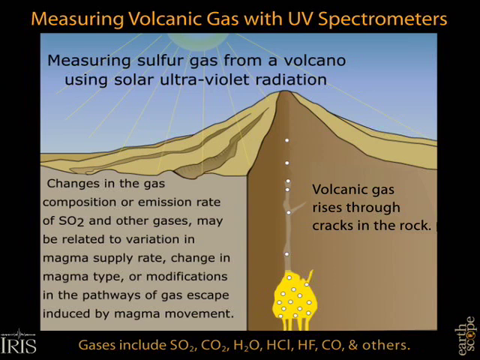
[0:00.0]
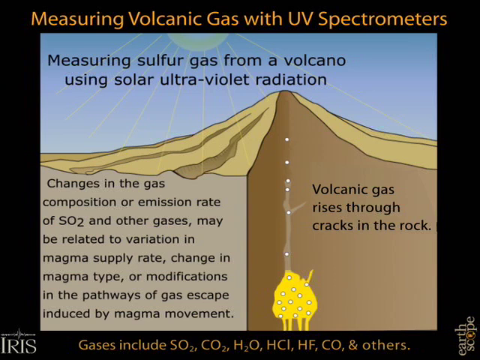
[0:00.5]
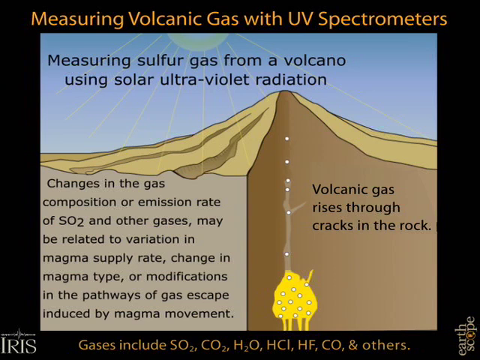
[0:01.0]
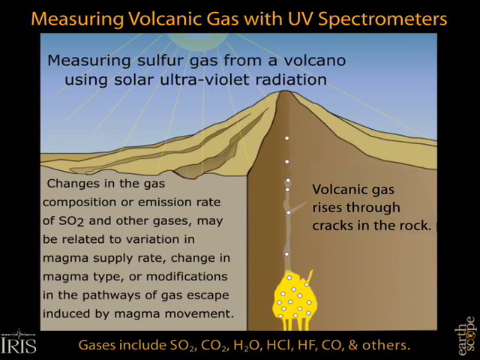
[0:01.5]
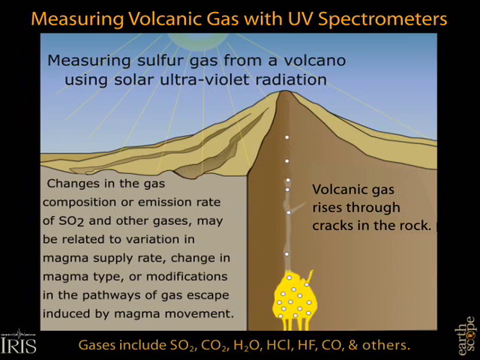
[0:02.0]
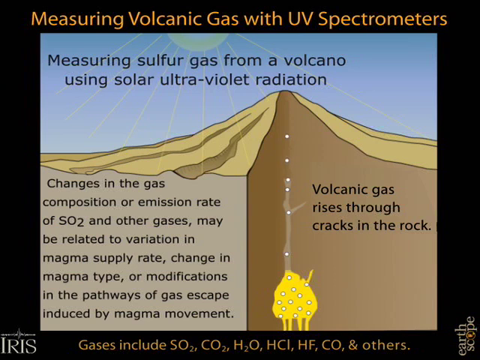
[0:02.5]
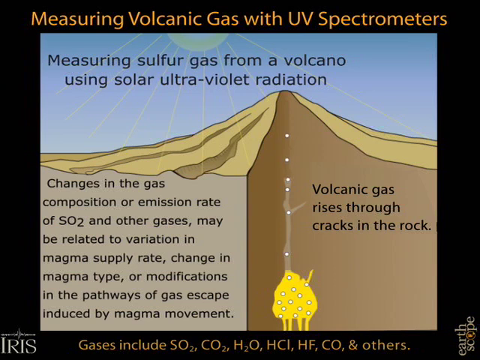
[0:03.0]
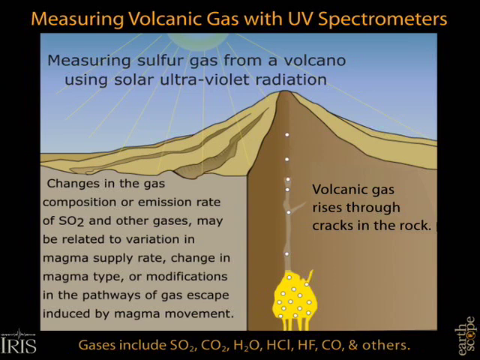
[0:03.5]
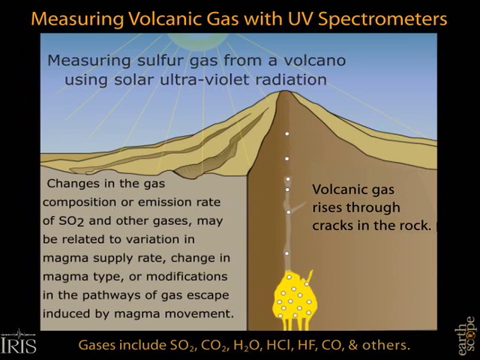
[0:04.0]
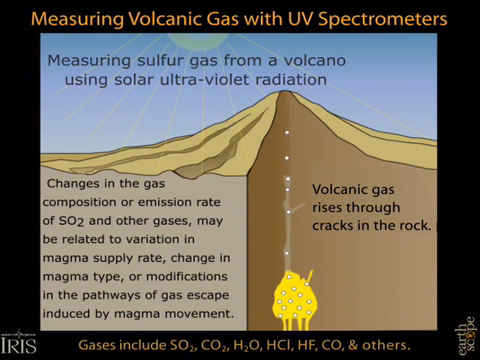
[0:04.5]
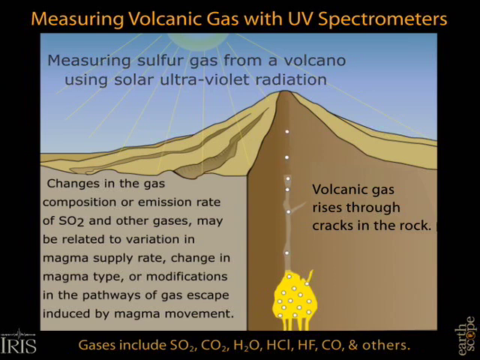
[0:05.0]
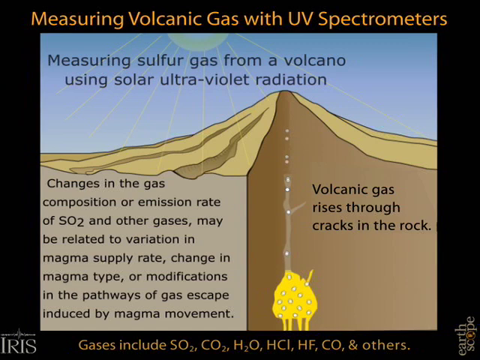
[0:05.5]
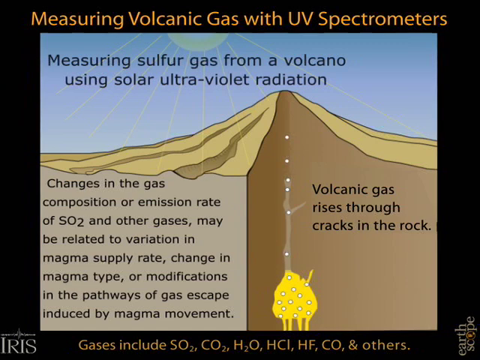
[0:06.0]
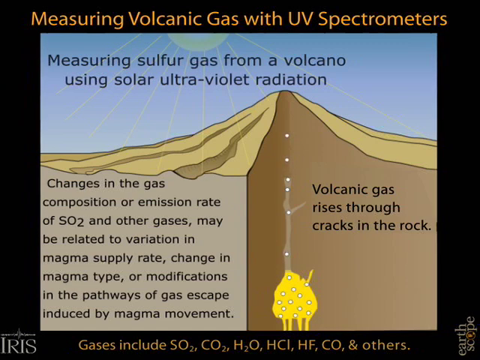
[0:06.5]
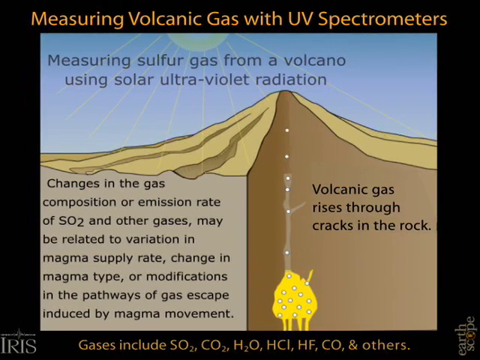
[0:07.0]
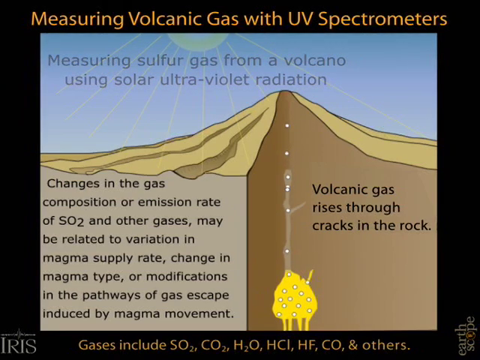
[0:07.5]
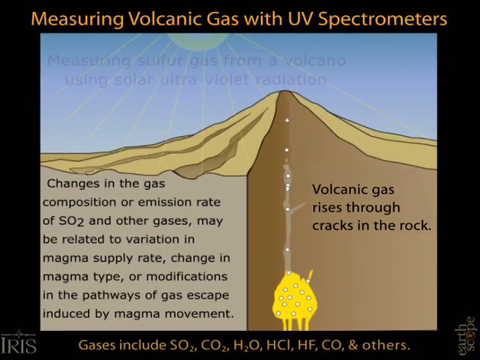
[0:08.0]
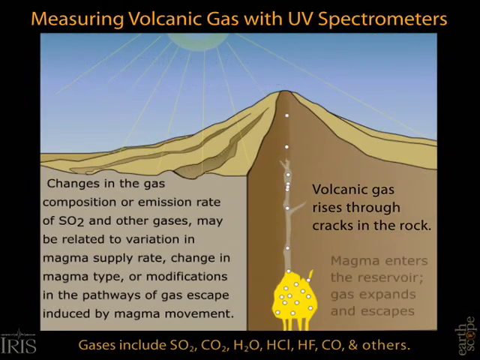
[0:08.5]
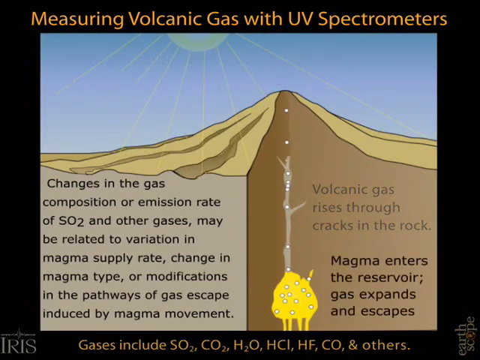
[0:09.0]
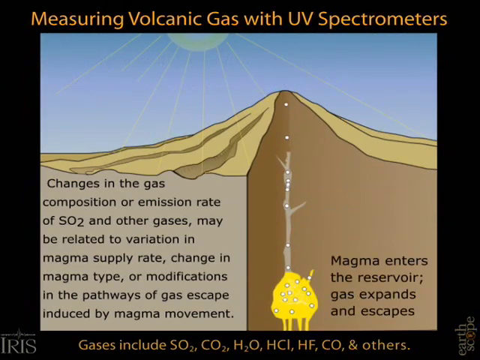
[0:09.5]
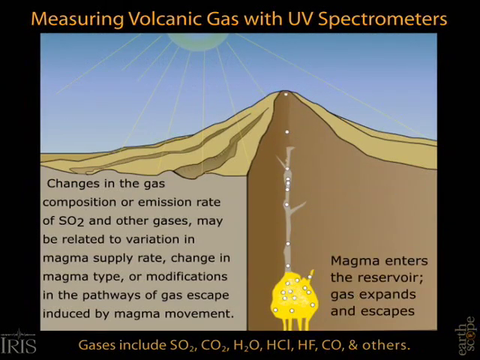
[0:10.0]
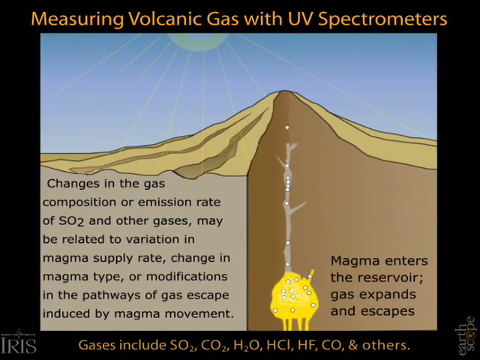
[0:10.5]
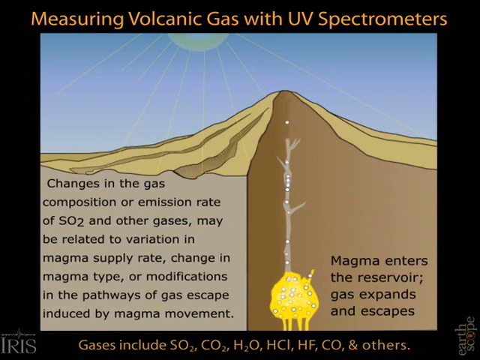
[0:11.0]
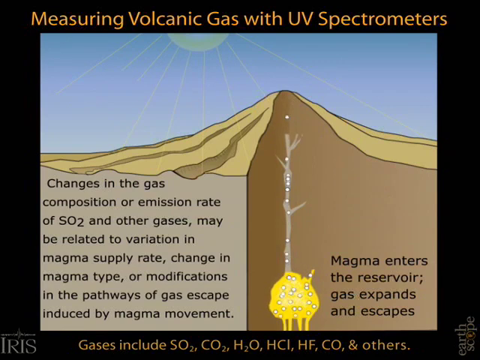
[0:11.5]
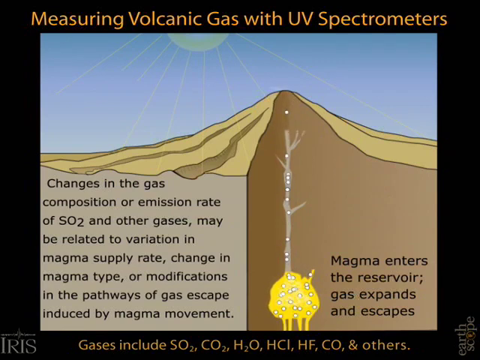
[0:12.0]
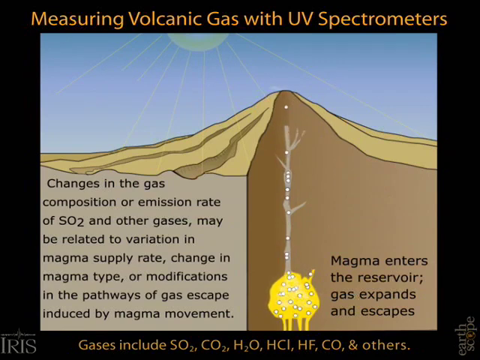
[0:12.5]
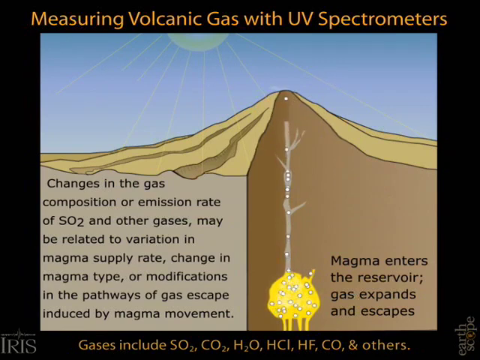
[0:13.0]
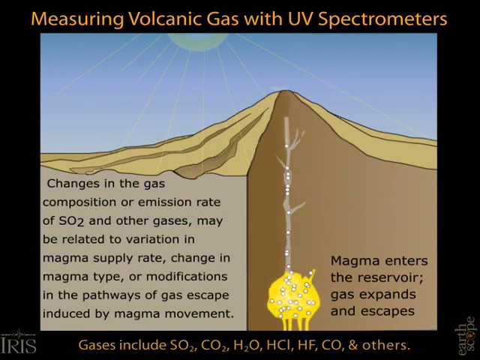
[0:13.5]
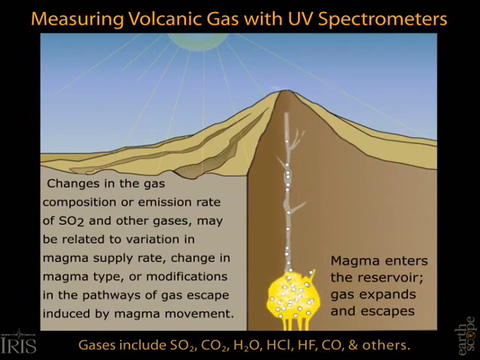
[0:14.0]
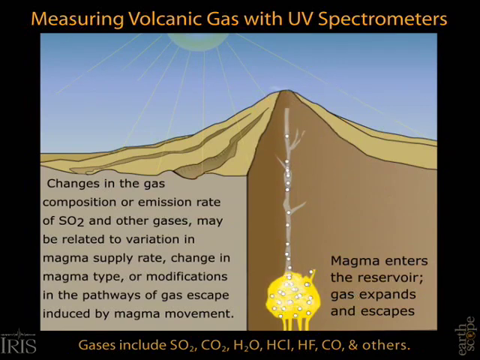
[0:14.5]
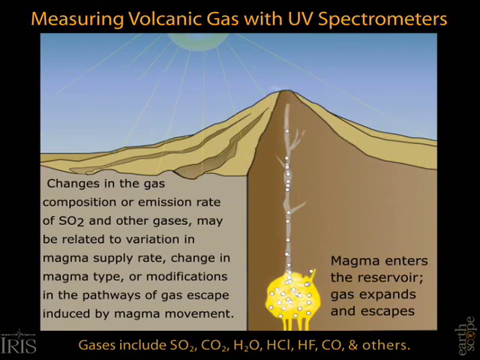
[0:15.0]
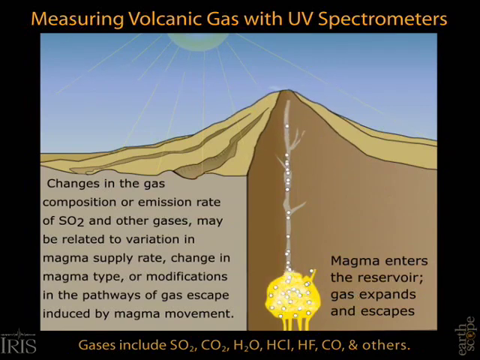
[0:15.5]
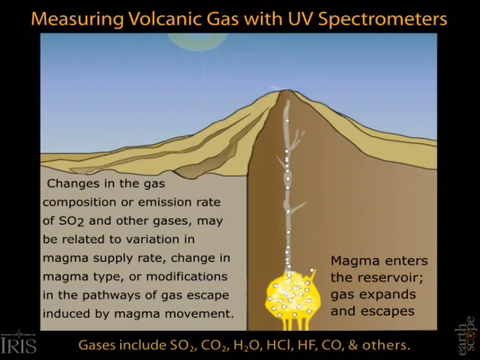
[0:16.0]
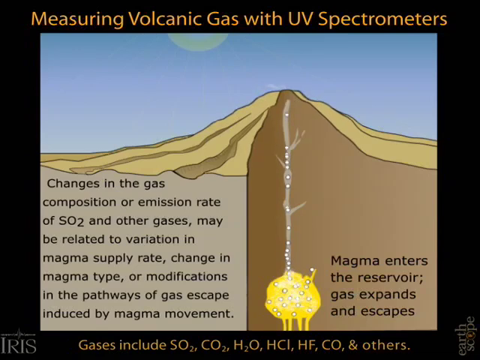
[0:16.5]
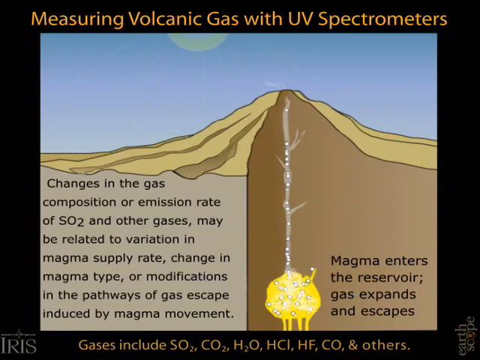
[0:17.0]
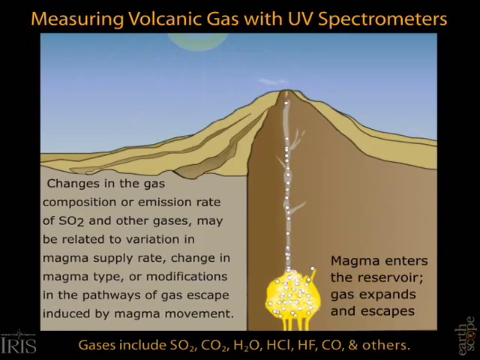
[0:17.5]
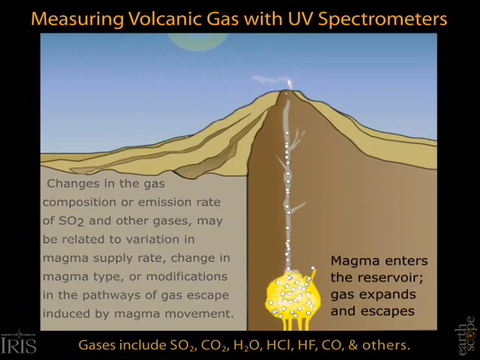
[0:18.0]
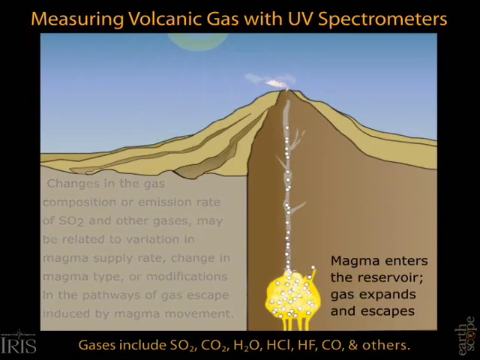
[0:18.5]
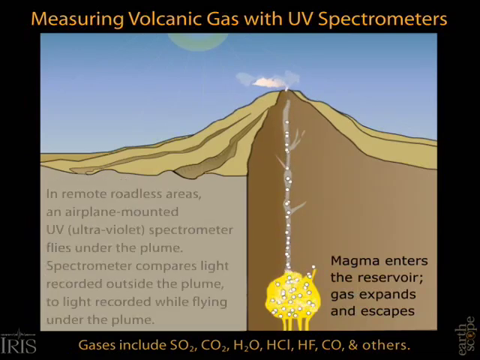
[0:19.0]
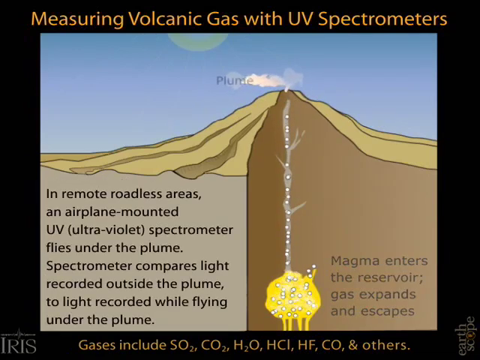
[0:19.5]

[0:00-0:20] The video opens on a still, animated scientific diagram of a volcano, with a label at the very top reading "measuring volcanic gas with UV spectrometers." The volcano stands in a barren landscape with nothing else around it. An animated yellow-gold sun shines overhead, its rays shining down onto the light brown volcano, which comes to a point at the top and widens as the elevation drops. Labeled diagrams show the inside of the volcano: in the middle, a magma chamber runs down to the bottom, where magma can be seen. A label states "volcanic gas rises through the cracks in the rock." On the left side of the image, a text paragraph reads "Changes in the gas composition or emission rate of SO2 and other gases, may be related to variation in magma supply rate, change in magma type, or modifications in the pathways of gas escape induced by magma movement."